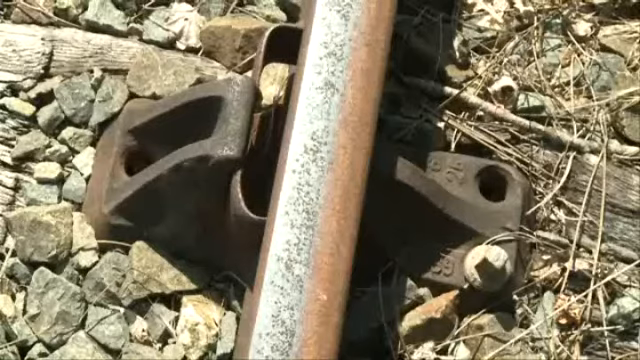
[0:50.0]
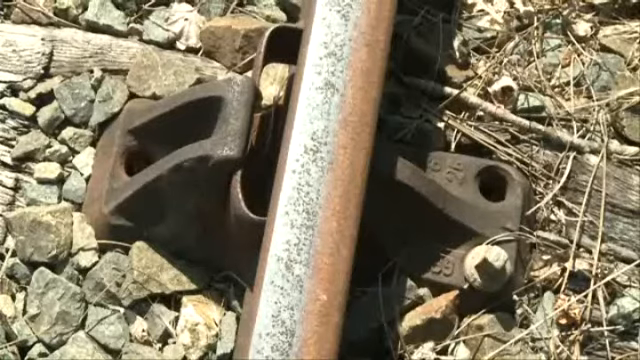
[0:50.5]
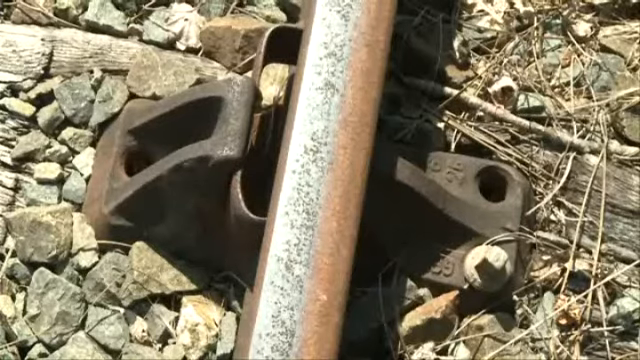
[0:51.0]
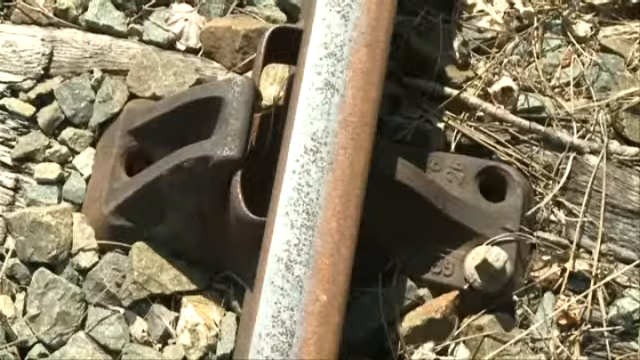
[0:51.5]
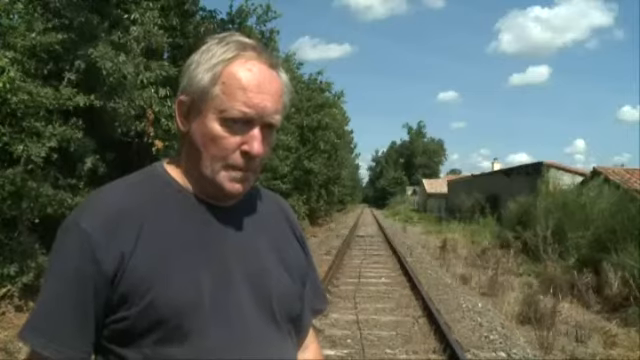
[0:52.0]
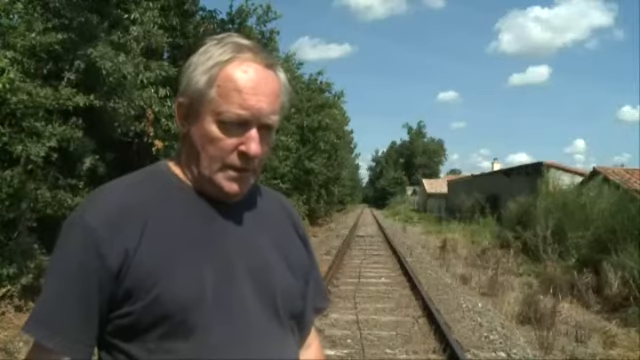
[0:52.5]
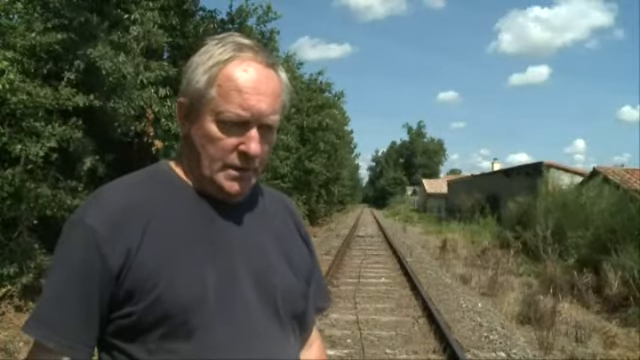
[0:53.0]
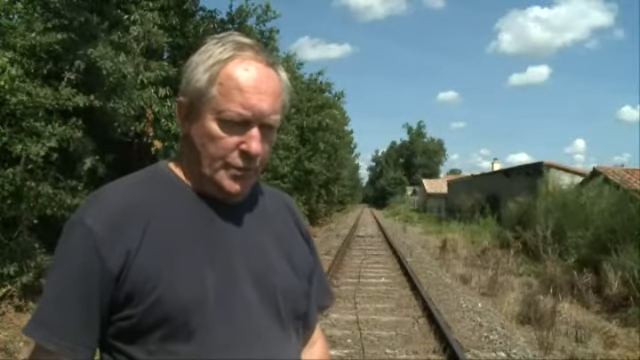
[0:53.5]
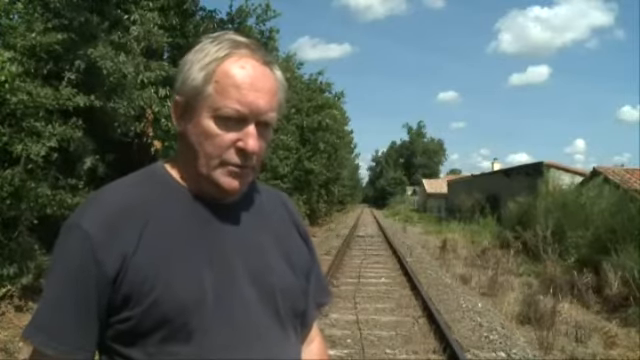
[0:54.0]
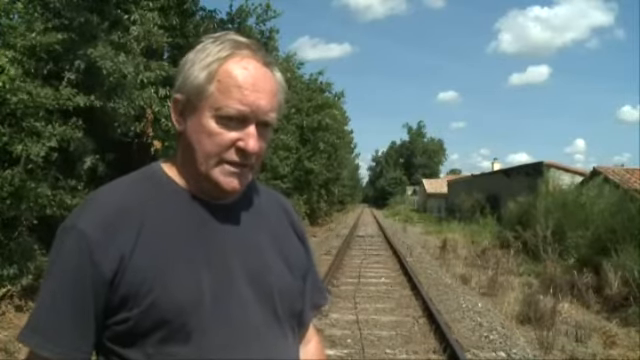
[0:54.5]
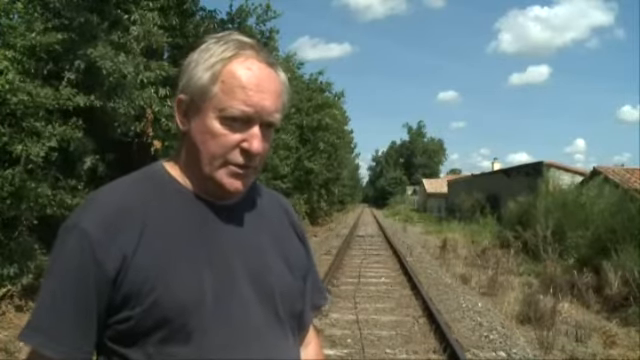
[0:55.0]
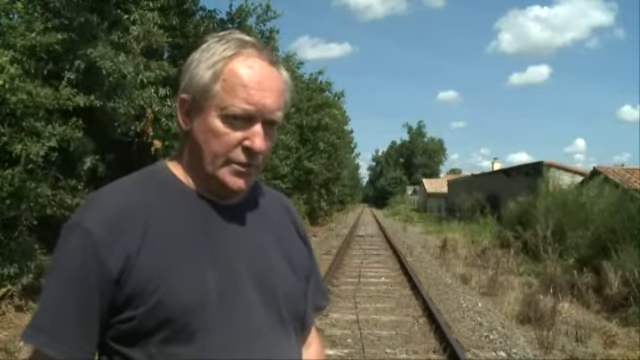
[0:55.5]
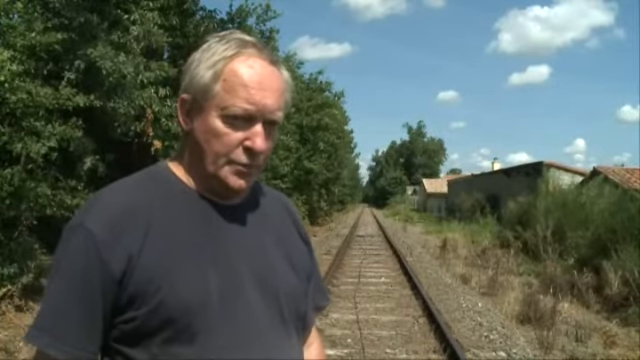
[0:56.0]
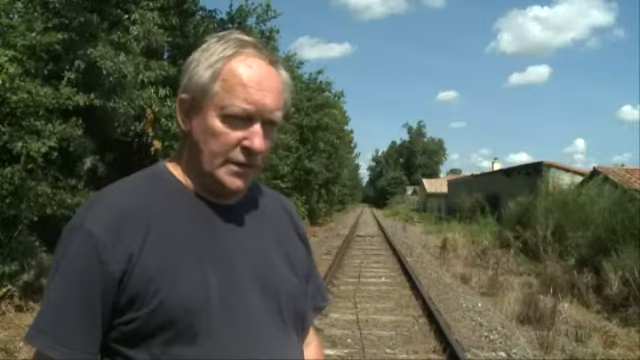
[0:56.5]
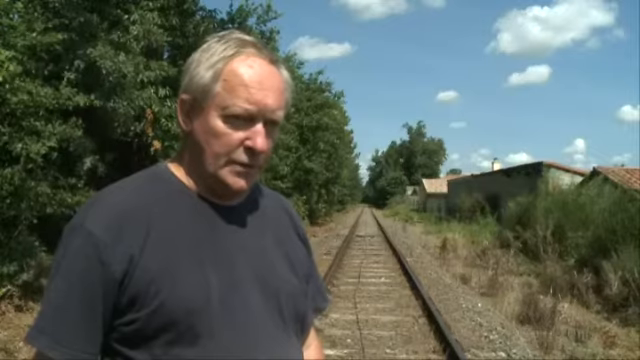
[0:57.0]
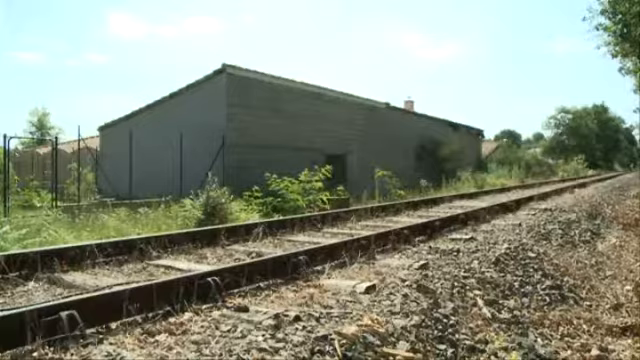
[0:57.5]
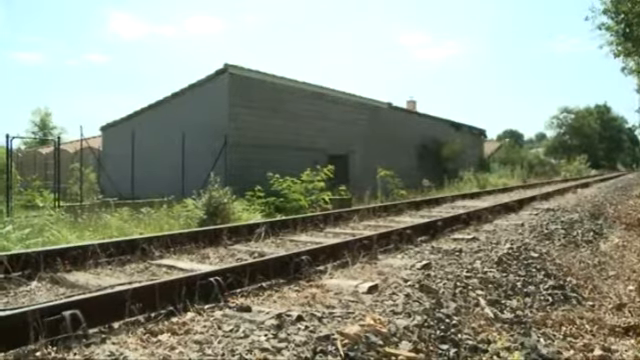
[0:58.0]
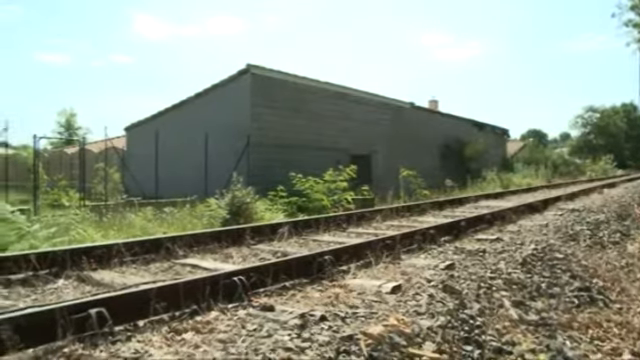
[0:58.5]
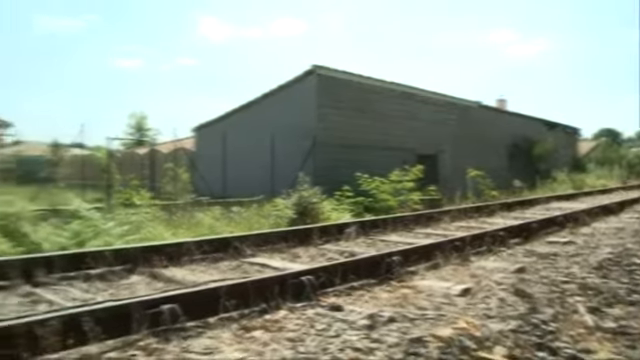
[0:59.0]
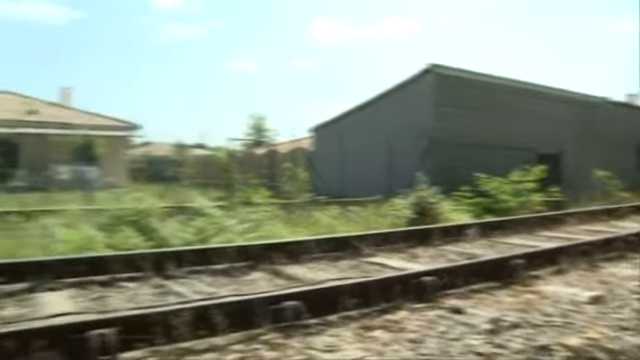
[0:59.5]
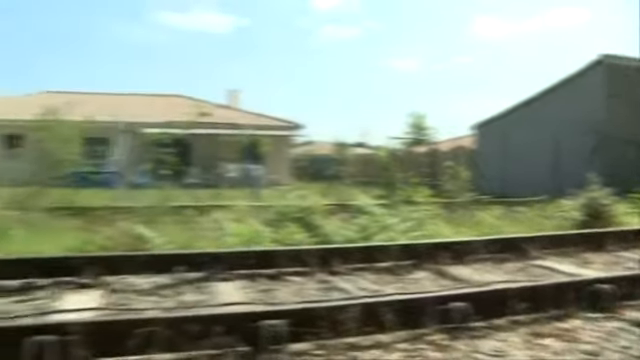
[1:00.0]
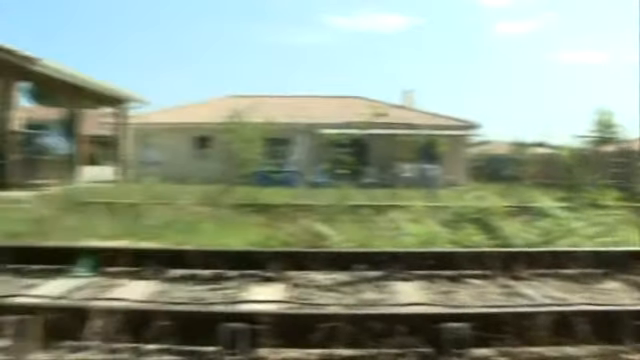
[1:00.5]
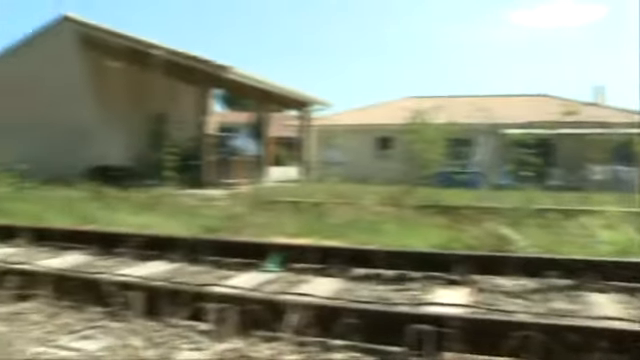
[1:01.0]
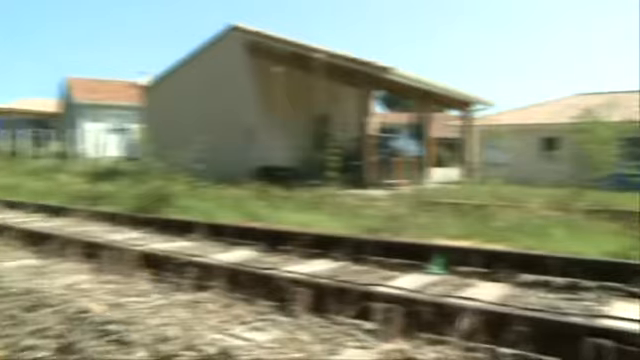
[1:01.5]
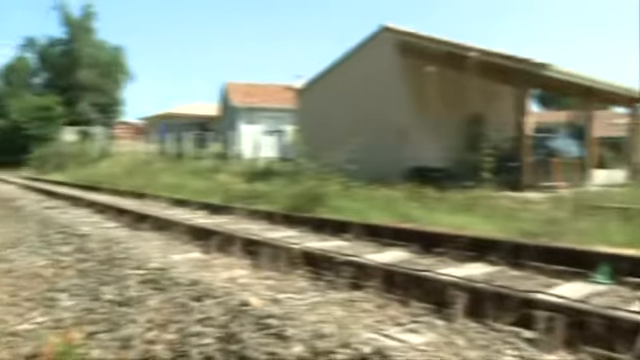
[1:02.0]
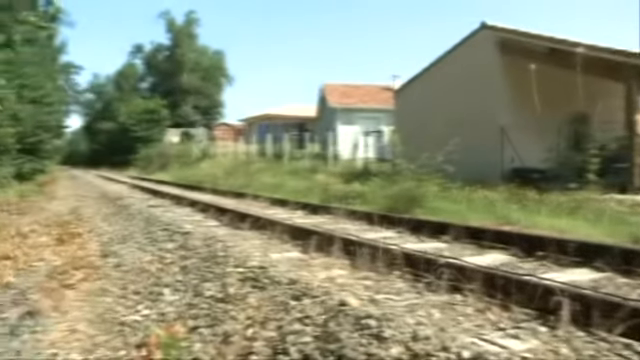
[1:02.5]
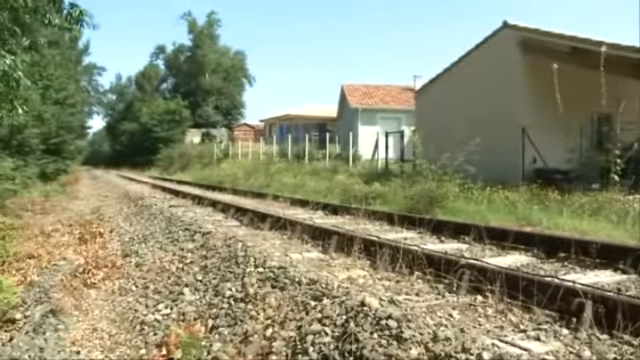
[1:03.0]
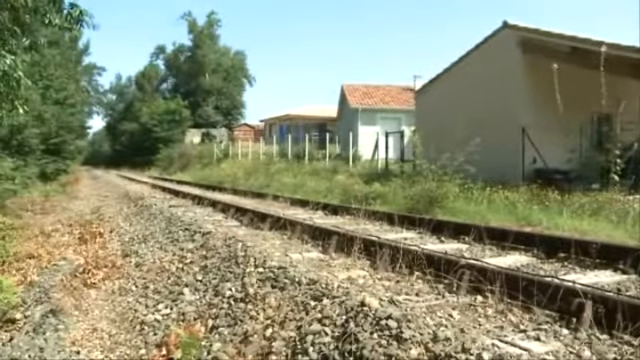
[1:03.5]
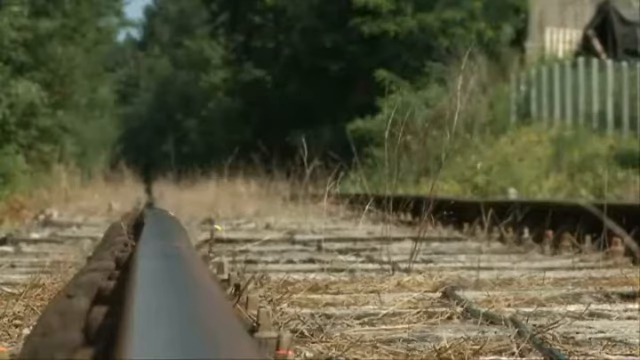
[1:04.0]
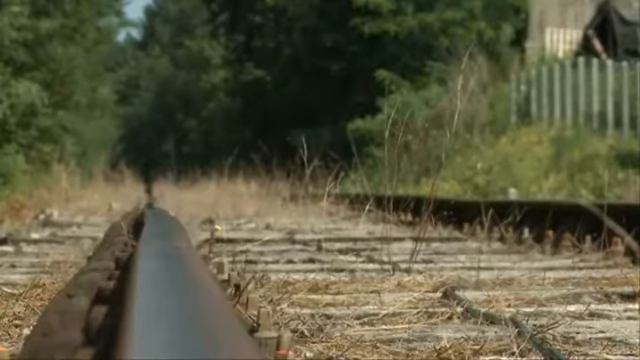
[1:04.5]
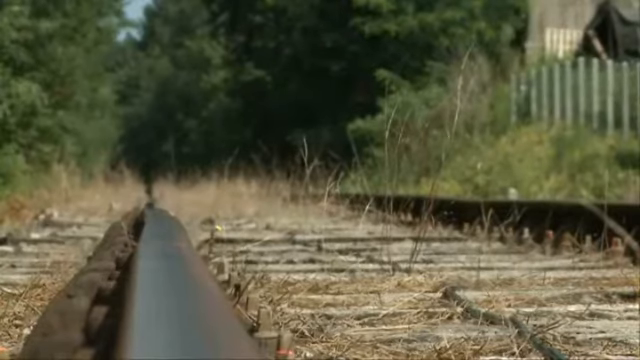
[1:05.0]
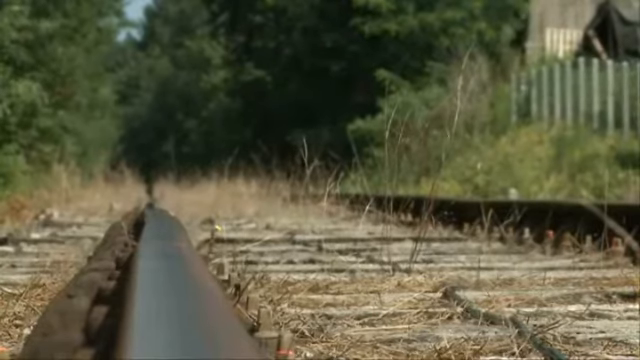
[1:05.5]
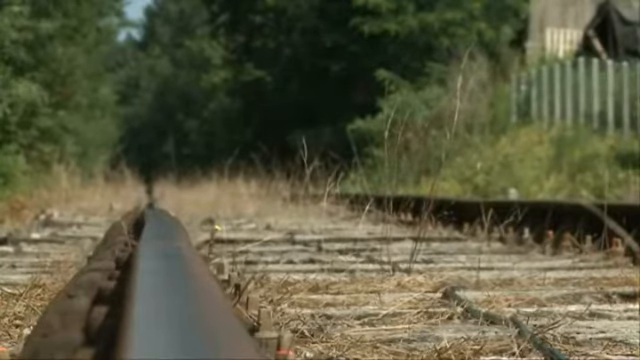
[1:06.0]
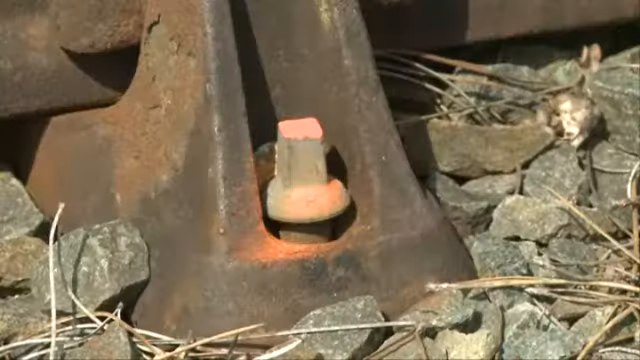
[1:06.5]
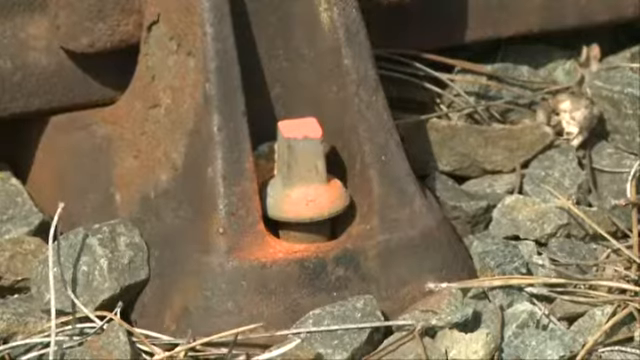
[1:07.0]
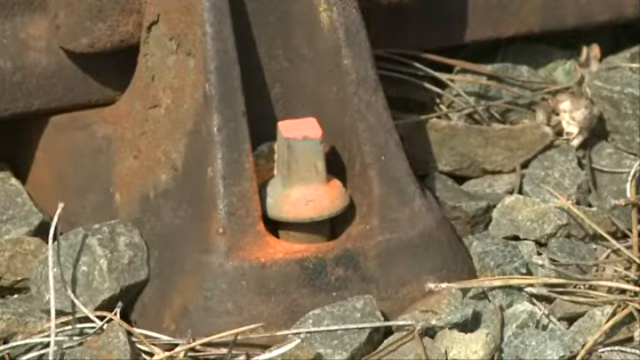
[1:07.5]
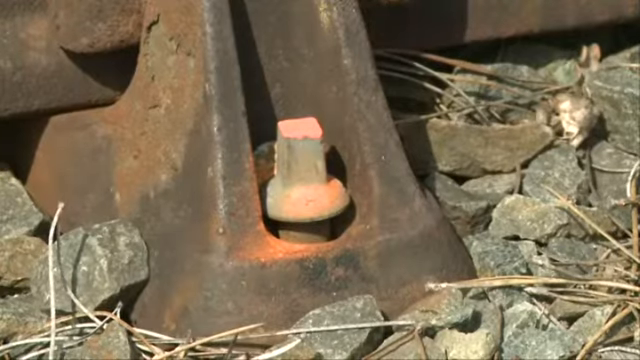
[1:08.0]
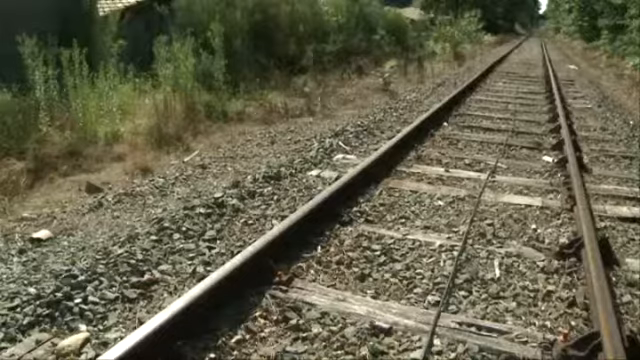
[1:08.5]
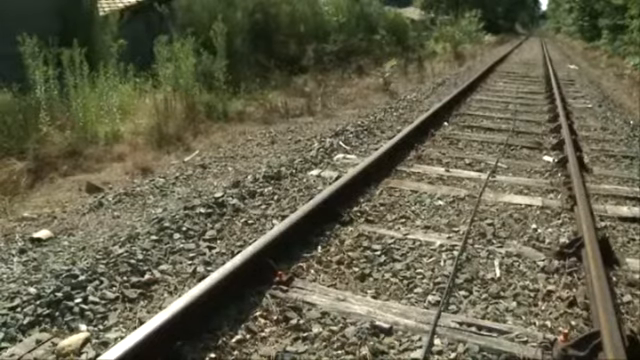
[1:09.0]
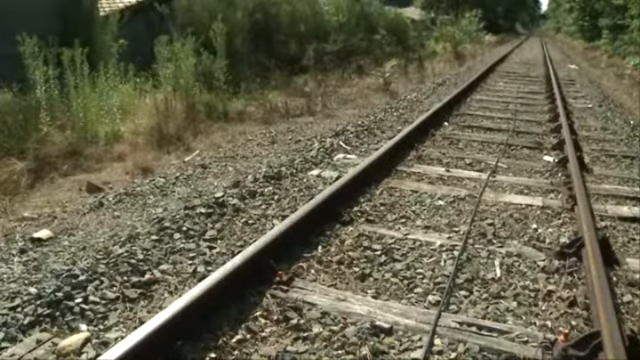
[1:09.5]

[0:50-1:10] A close-up shows another bracket that is meant to be held down on the track. The view pans to the man, who seems to be being interviewed and who has been showing the loose screws and parts not properly held down on the railroad track. On the left, green brush or a forest line is behind him; on the right are uncut brush or grass and a few houses with clay tile roofing. The man wears a faded black t-shirt and is a white man, maybe in his mid to late 60s. A panning view of the railroad track follows, showing houses, the green forest line, chain-link fencing, and some garages. Further shots show the uncut grass on the railroad tracks, bolts that are not in the ground on the track, and the gravel beneath the track.